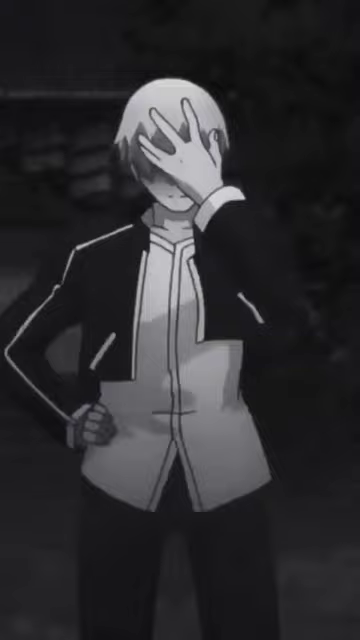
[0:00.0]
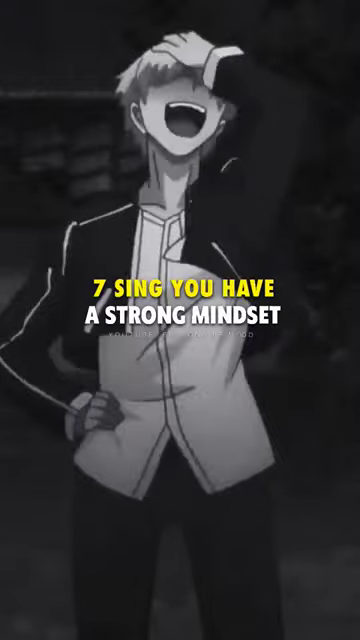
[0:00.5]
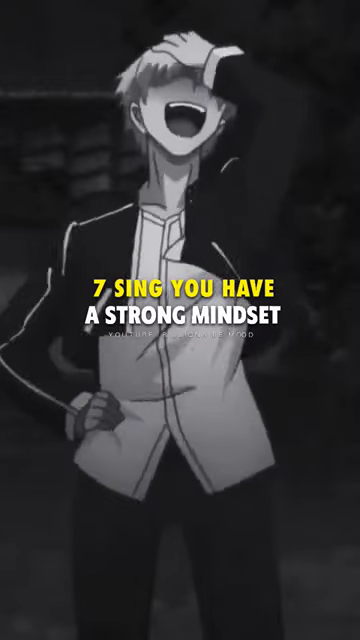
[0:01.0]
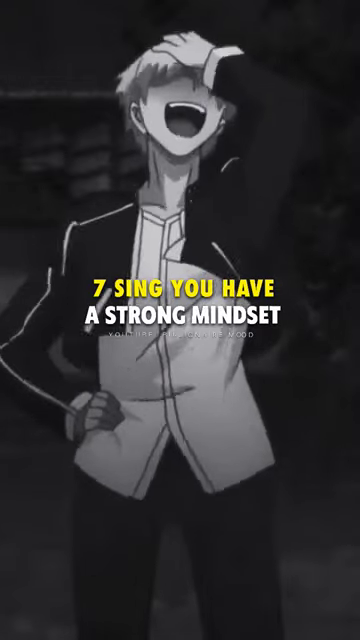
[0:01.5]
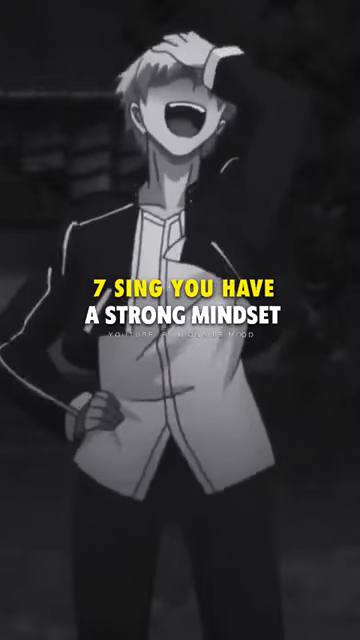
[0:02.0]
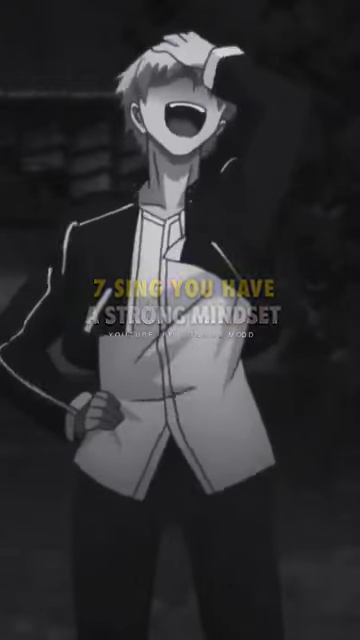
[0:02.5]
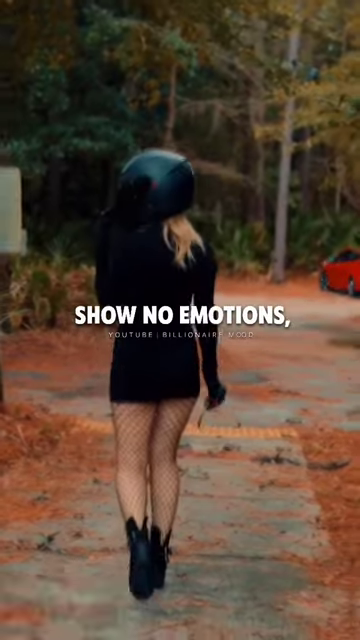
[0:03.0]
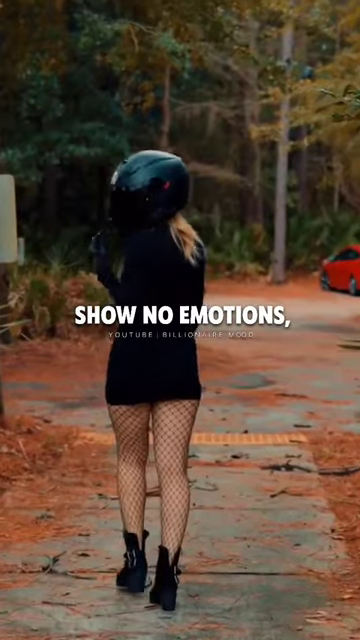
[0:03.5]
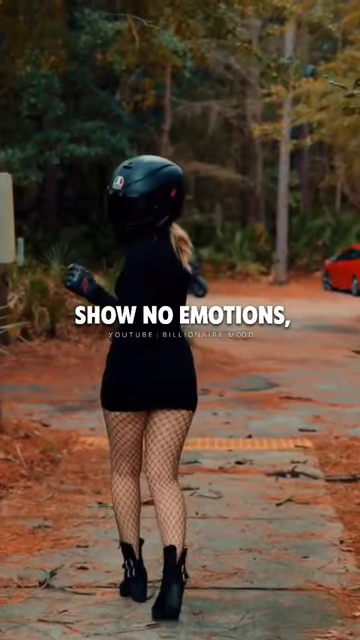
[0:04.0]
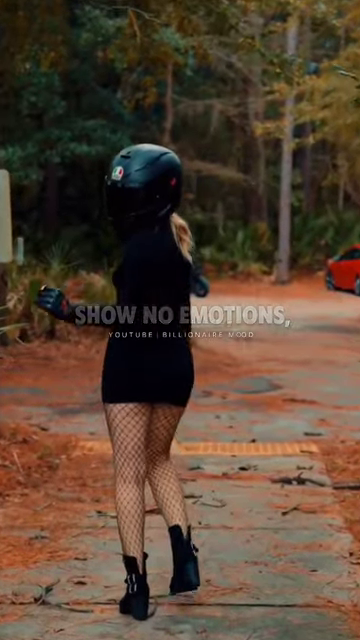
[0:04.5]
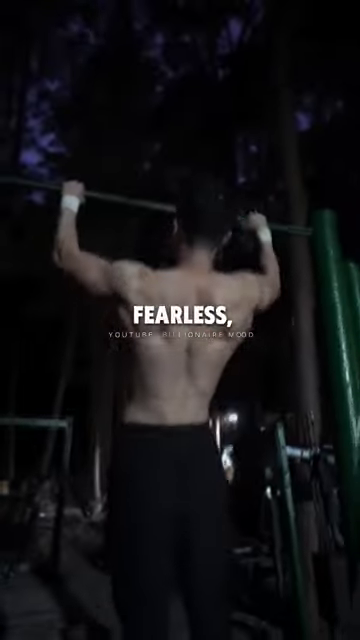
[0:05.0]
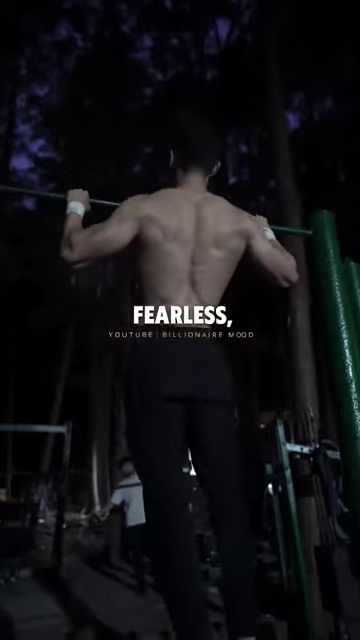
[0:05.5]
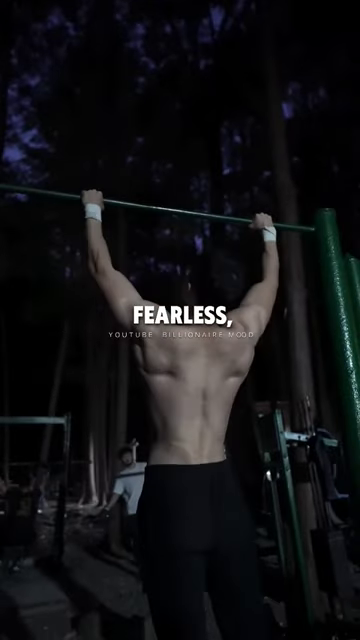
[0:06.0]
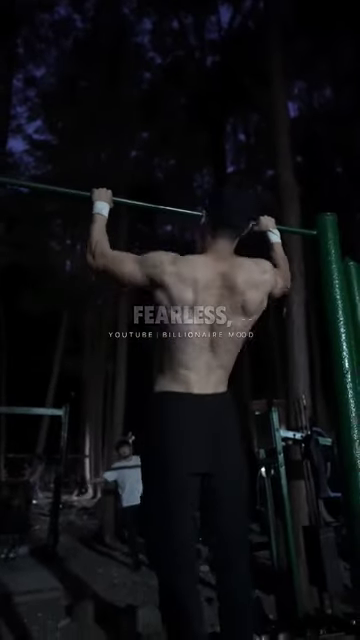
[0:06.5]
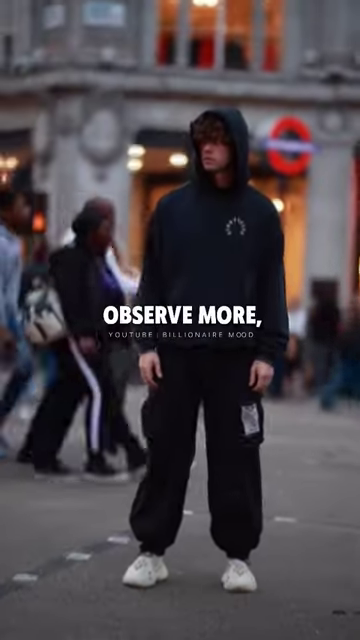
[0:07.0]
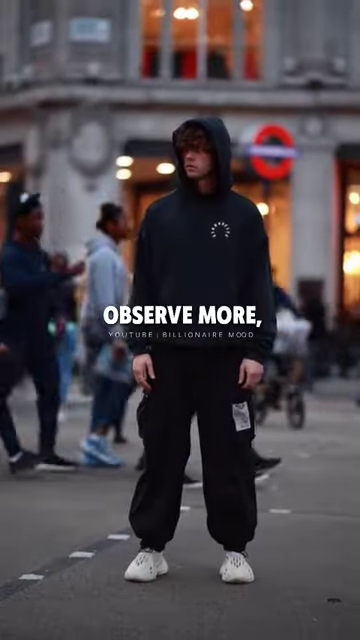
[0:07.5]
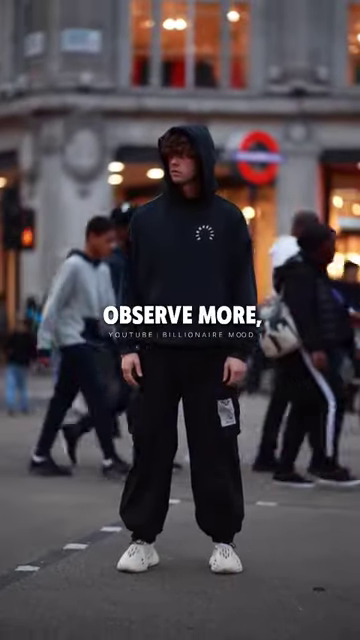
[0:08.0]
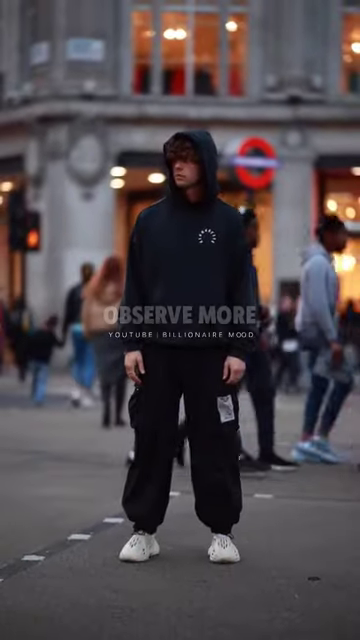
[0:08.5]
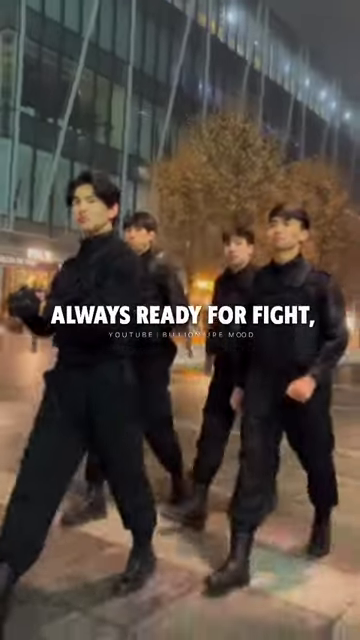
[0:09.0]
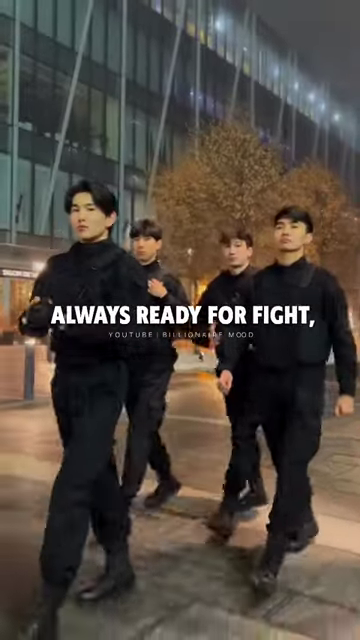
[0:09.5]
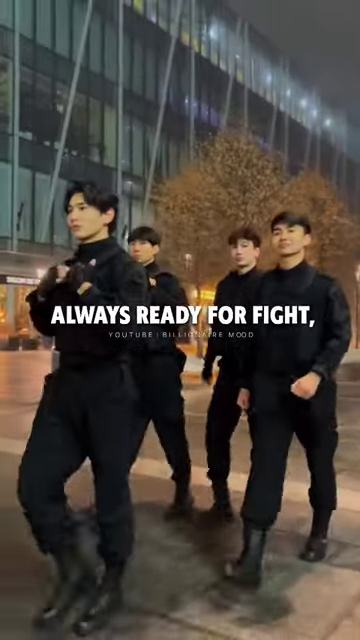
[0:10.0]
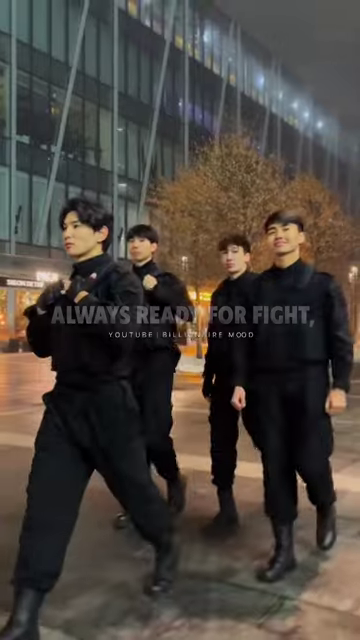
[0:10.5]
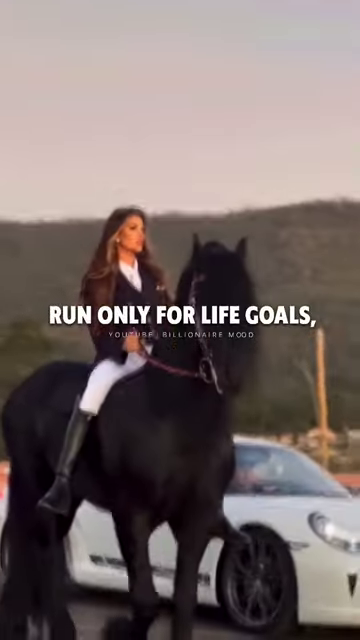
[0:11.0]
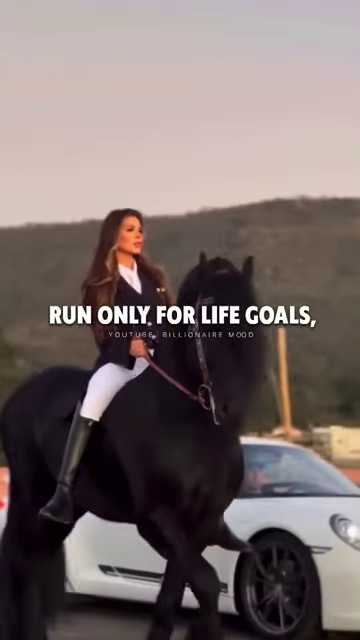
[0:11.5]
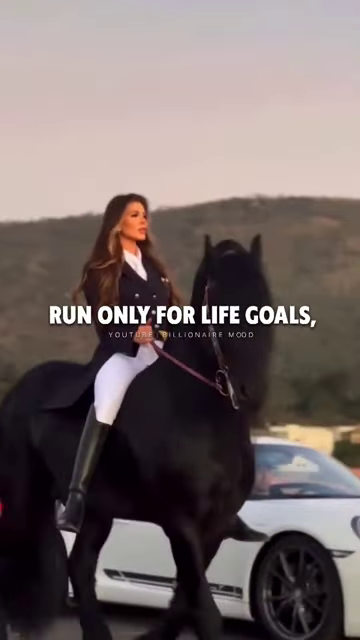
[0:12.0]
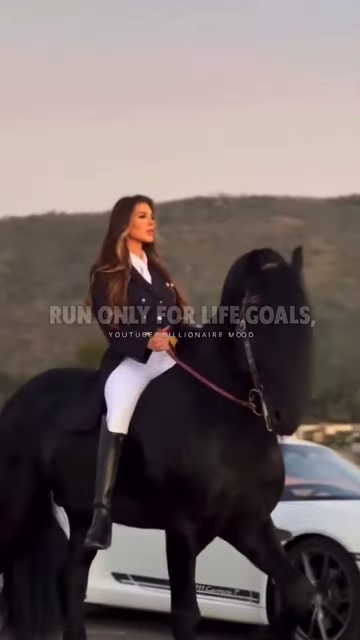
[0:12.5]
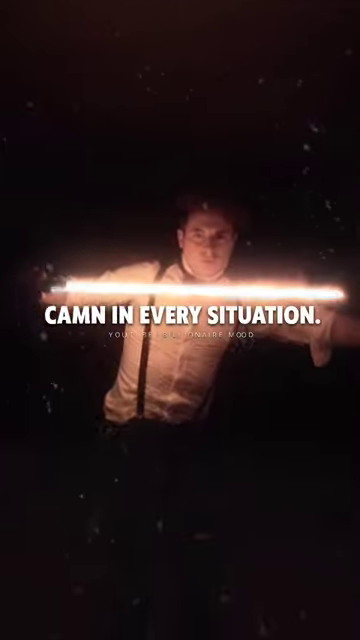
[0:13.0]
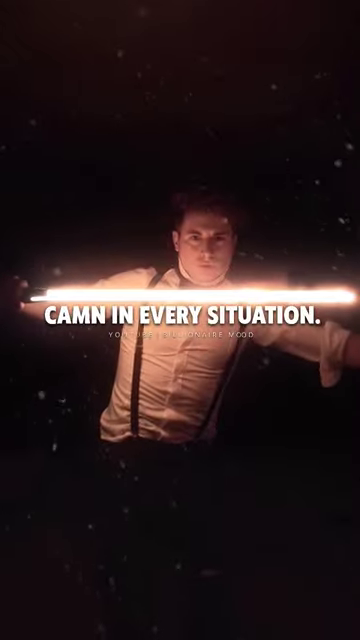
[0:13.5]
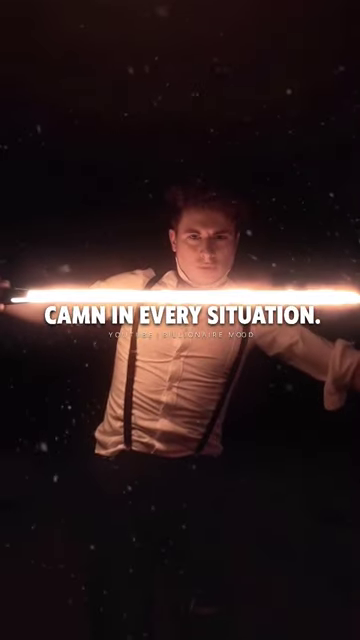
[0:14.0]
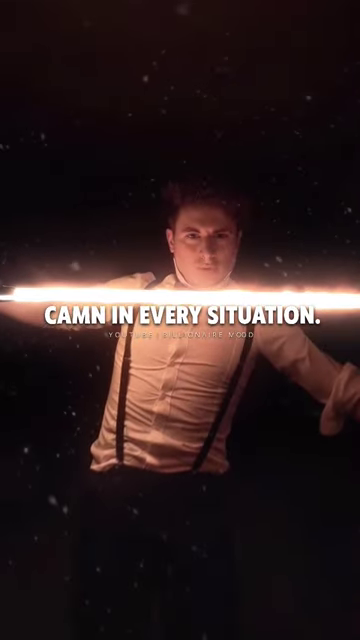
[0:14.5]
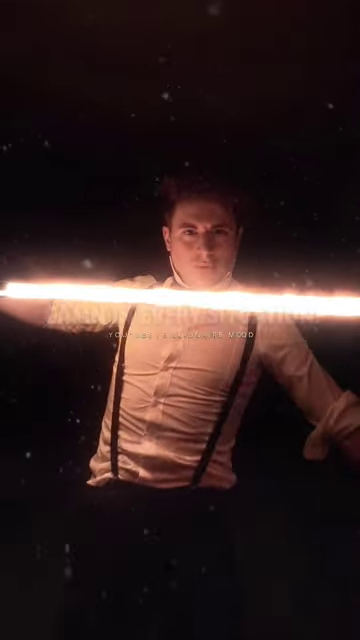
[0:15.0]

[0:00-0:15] The video opens on a black and white image of a cartoon or animated man standing and facing the camera, one hand on his hip and the other covering most of his face. He wears a white shirt, dark pants, and a somewhat cropped black jacket with a light-colored stripe running down the sleeve, and he has light-colored hair; his eyes are not visible. He then lifts his head and laughs with his mouth open very wide, showing his top teeth. Text in front of him reads "7Sing, you have a strong mindset, YouTube billionaire mood." The next scene shows a woman in a short black skirt, a black long-sleeve top, fishnet stockings and black boots, wearing a helmet with some blonde hair spilling out beneath it. She walks down what seems to be a sidewalk or concrete walkway; it looks like it may be wet outside, and some pine straw is stuck to the pathway. She walks toward a parking lot or parking area where a red car is parked with trees all around it, almost like a parking lot in the middle of a forest. She starts to look back toward the camera, but her face cannot be seen because of the helmet. Next, a shirtless man in black pants holds on to a chin-up bar that looks like it is in the middle of the woods, maybe at a park, and he is sort of doing chin-ups; he has white wristbands around his wrists. Text reads "fearless YouTube billionaire mood." Then a man in a black hoodie, black pants and white sneakers stands in the middle of a road with people walking around him and a building behind him, and text reads "observe more YouTube billionaire mood."